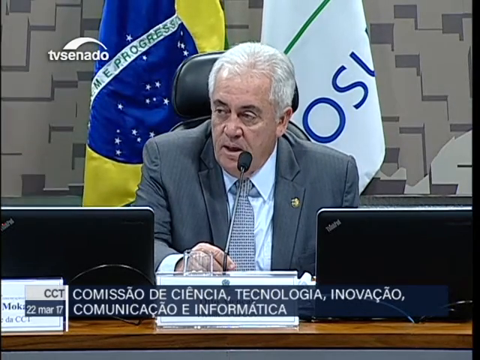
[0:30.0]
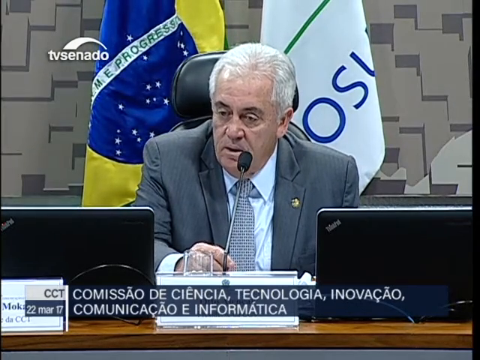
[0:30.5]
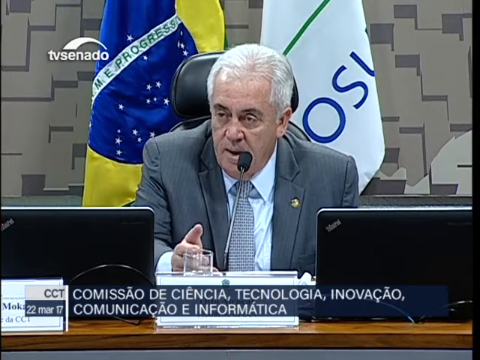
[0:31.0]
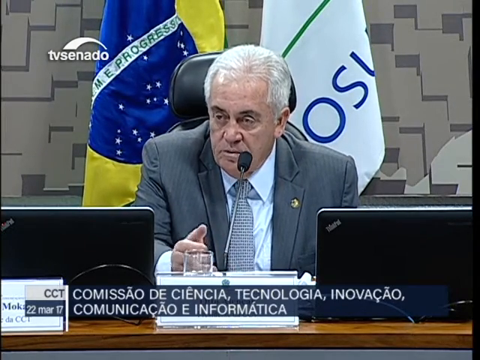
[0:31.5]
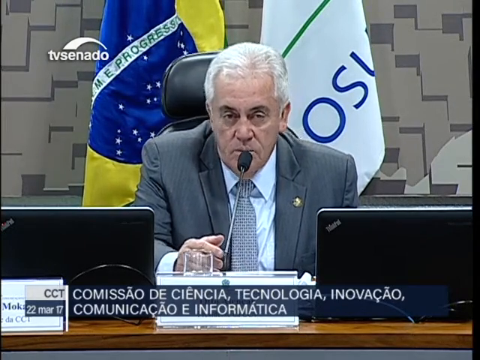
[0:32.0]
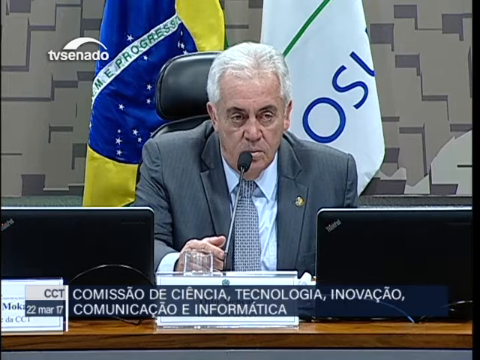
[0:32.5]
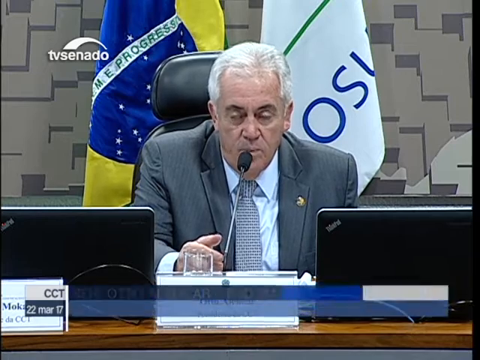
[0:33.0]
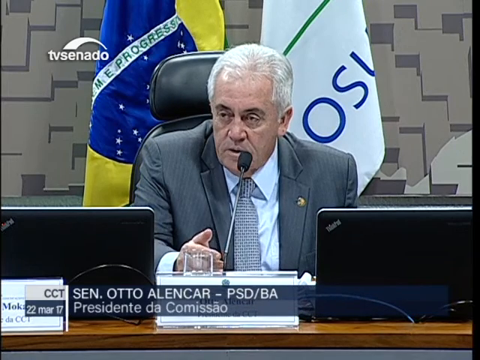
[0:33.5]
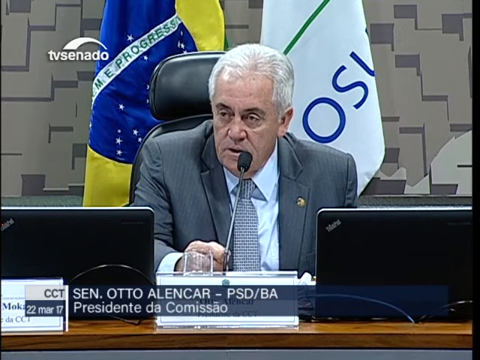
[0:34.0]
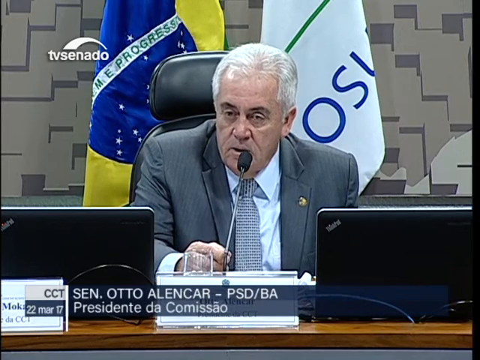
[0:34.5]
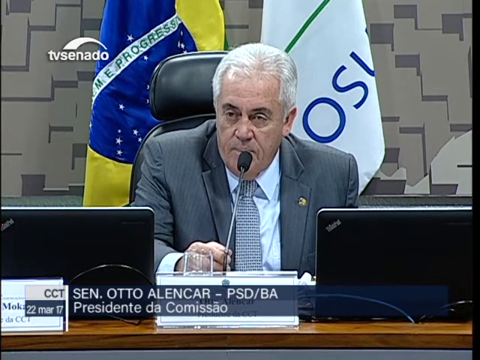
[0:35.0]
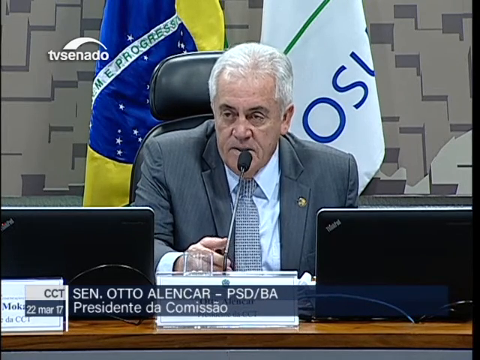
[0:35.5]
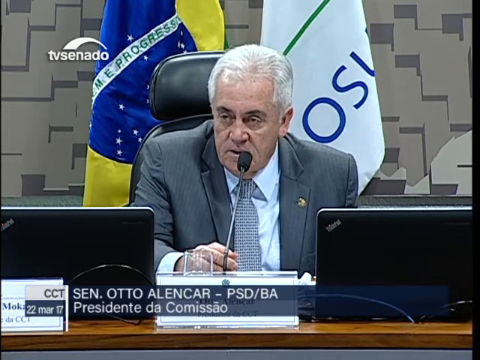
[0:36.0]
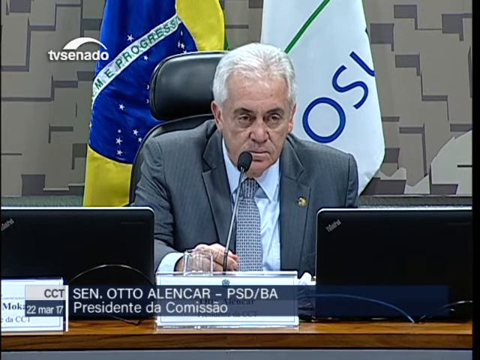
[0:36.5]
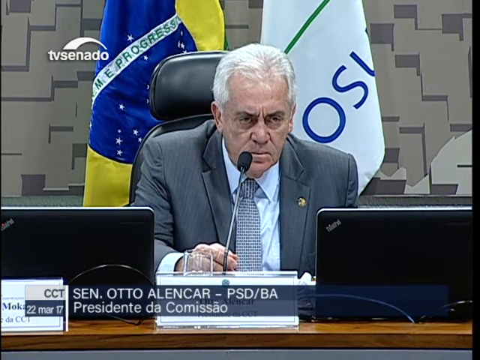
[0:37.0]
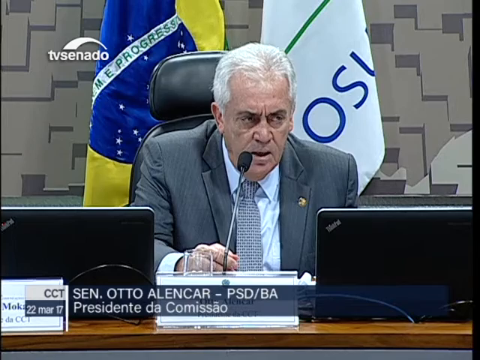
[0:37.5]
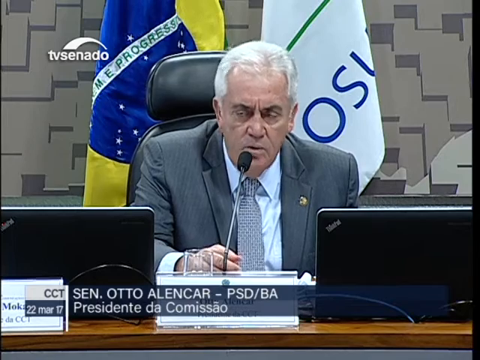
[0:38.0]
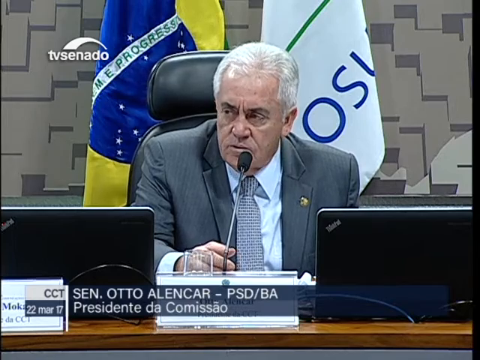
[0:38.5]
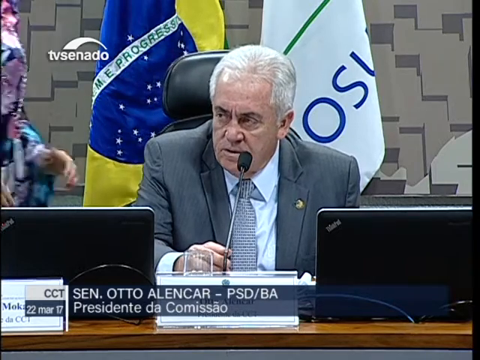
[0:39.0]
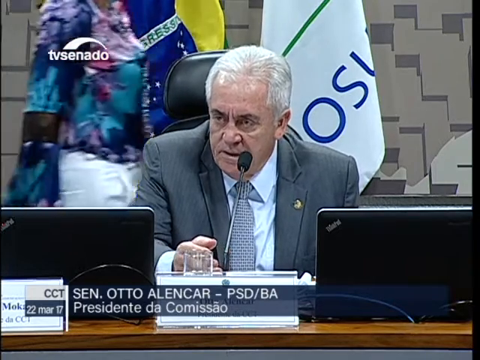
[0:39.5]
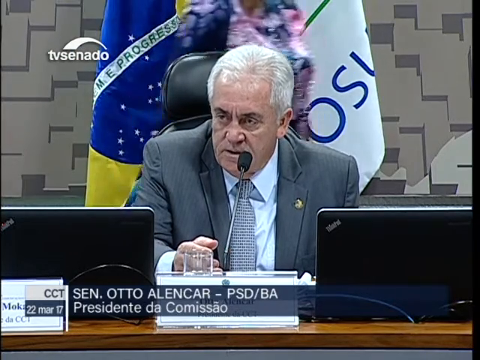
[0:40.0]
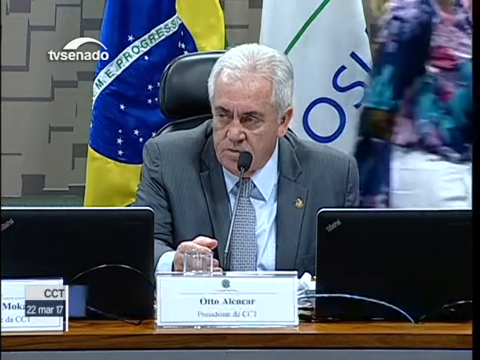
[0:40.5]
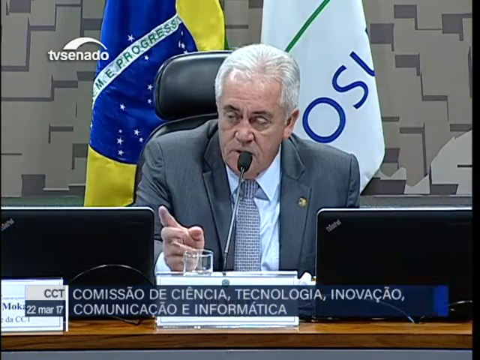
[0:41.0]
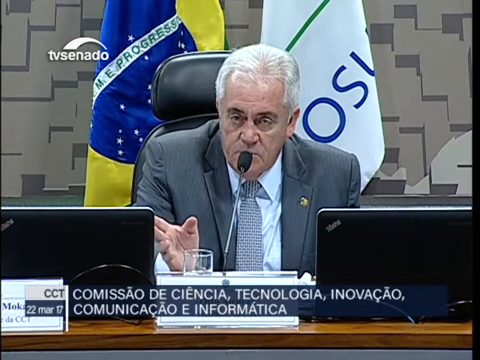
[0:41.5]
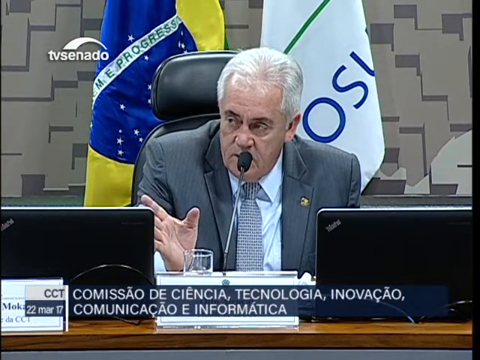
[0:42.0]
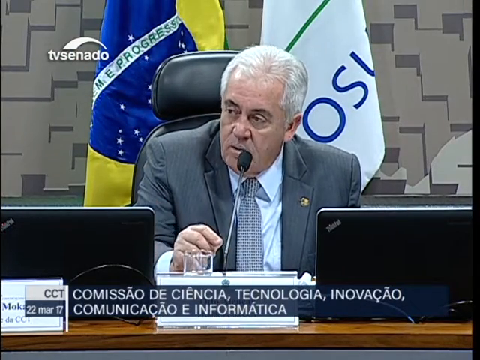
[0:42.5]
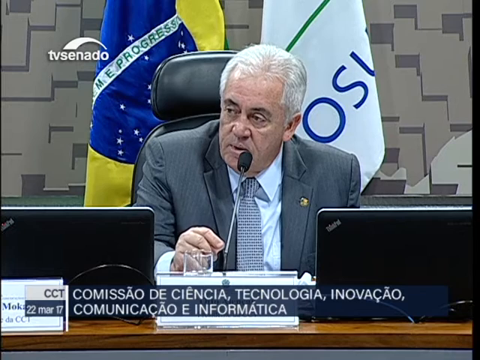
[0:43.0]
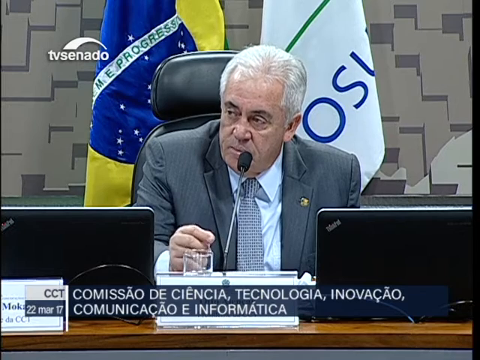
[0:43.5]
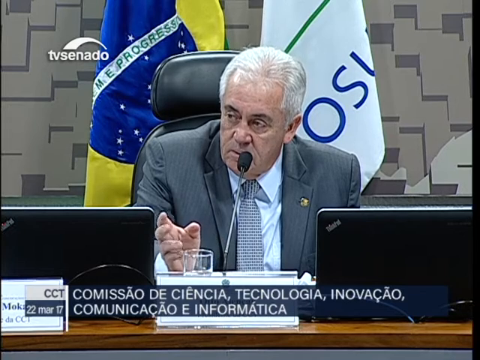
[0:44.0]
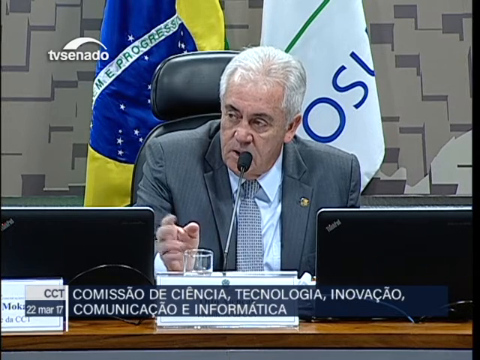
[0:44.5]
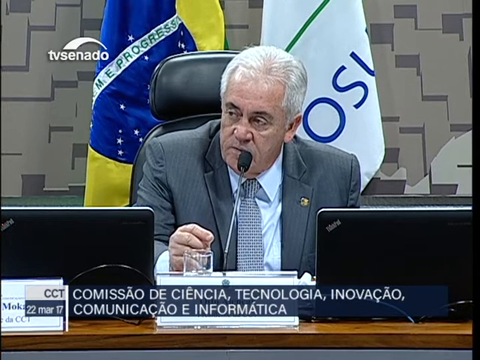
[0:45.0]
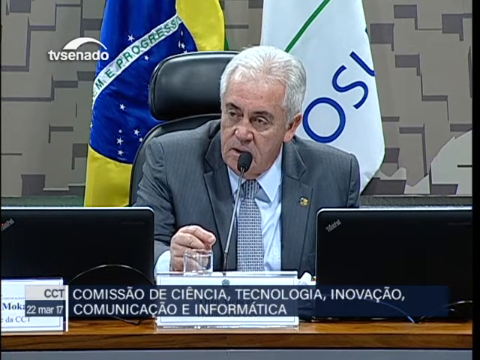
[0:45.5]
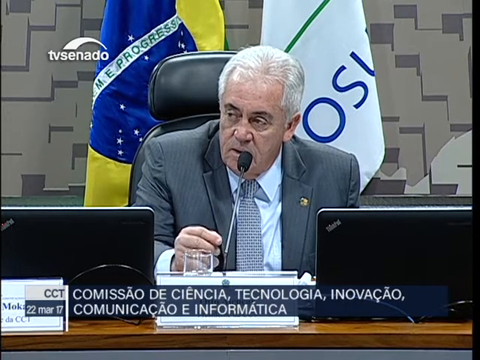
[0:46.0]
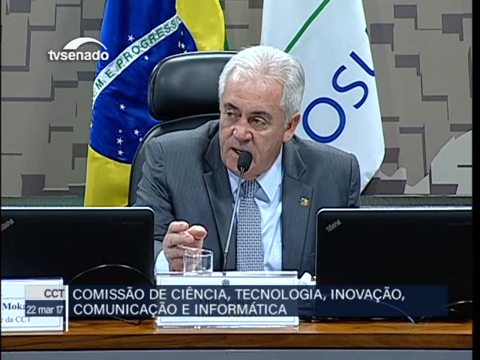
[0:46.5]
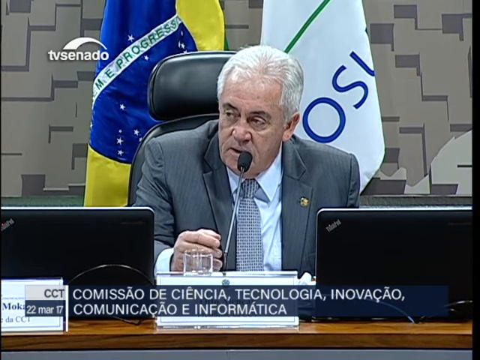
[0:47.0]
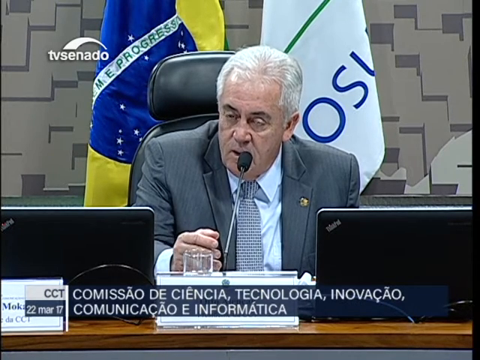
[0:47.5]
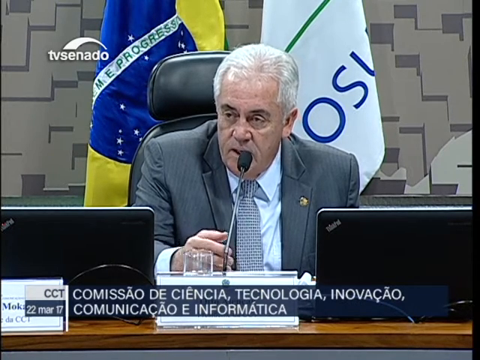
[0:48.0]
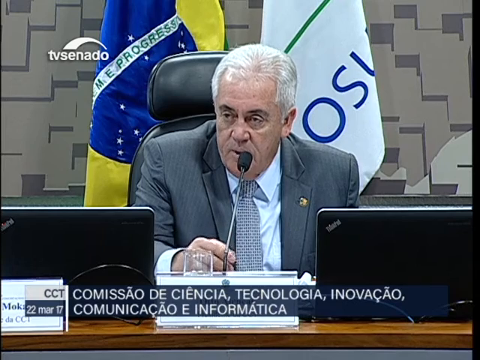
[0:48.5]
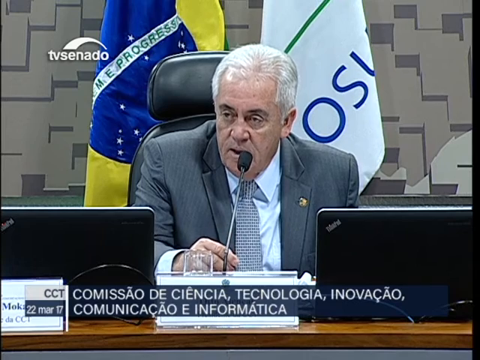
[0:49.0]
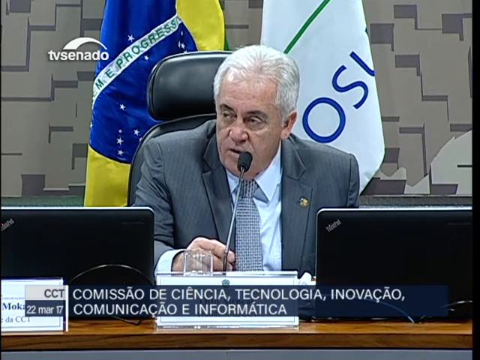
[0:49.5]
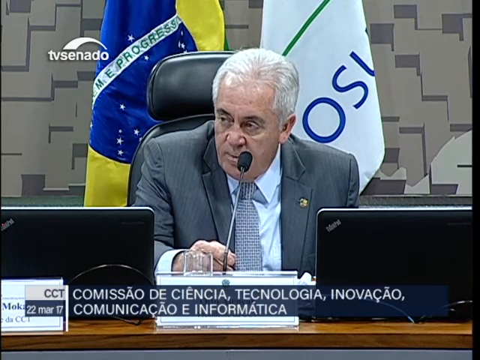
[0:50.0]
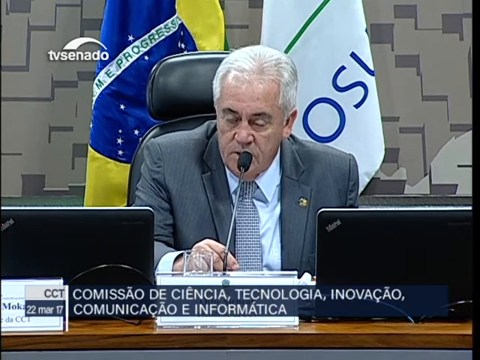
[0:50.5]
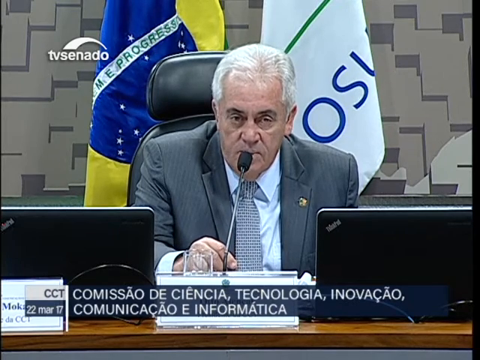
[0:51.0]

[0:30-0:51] The man in front of the desk continues to speak toward the crowd in front of him. He makes slight hand gestures, lifting a hand upward and opening it as he speaks, and keeps moving his eyes as he looks around at the crowd. At one point he looks to his left and lowers his eyebrows for a second, then starts speaking again. The woman behind him walks by once again in her colorful shirt and white pants, rather quickly, and goes out of frame. He keeps talking with slight hand gestures and eye movements, and the bottom text within the news bar changes once again. He is still speaking toward the audience as the video ends.